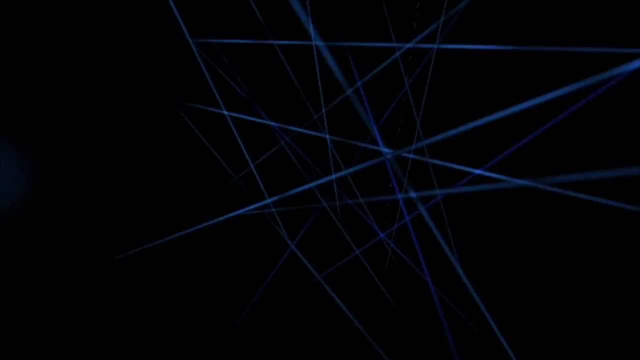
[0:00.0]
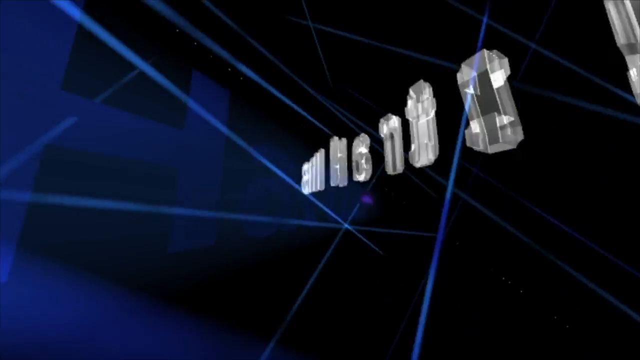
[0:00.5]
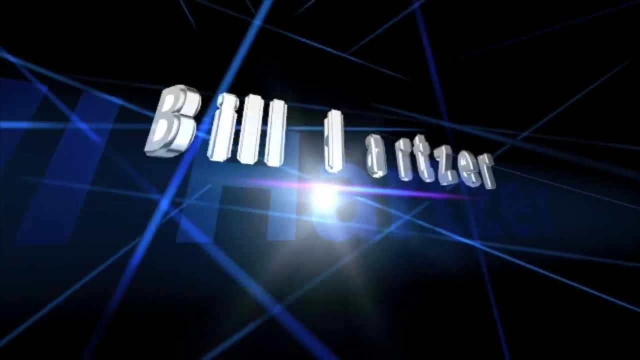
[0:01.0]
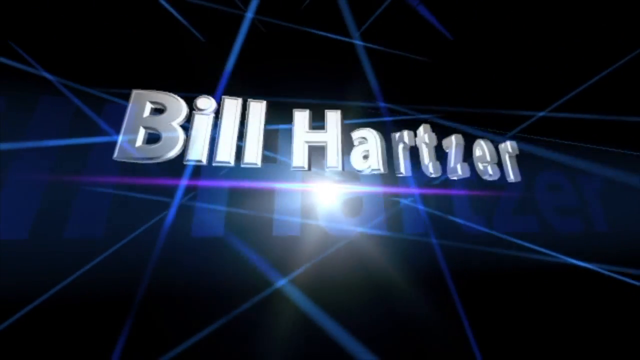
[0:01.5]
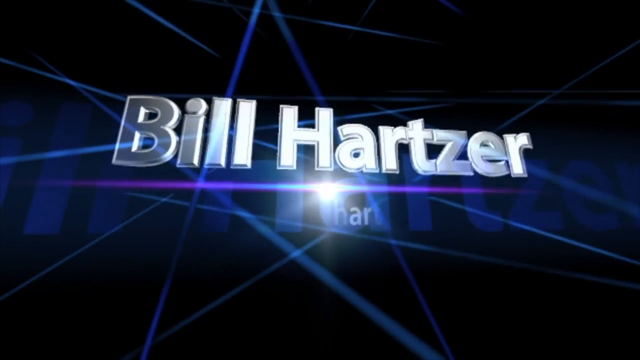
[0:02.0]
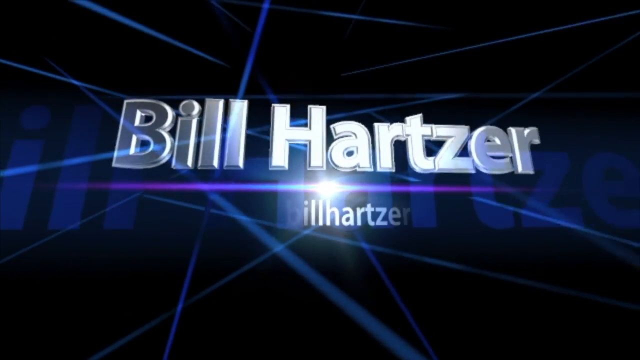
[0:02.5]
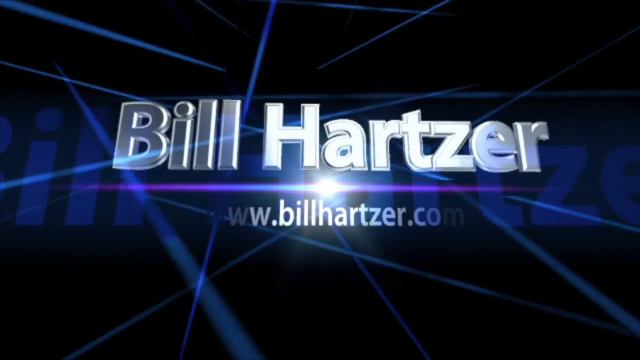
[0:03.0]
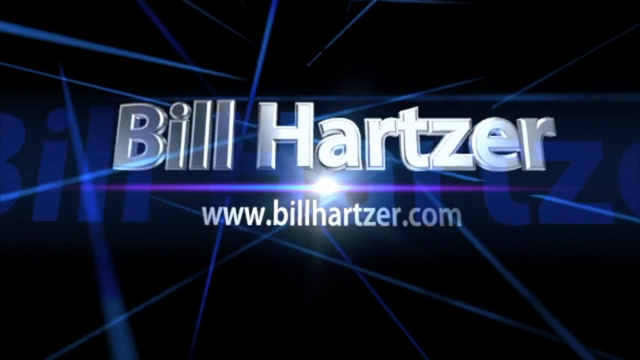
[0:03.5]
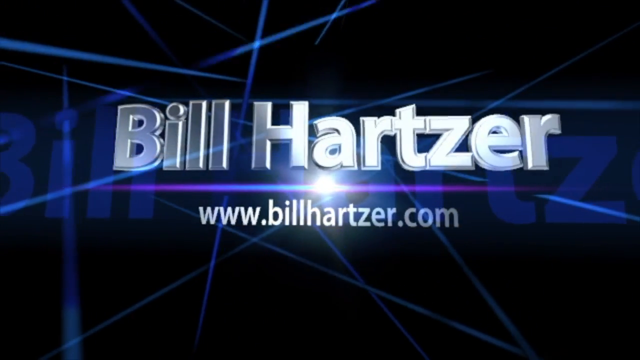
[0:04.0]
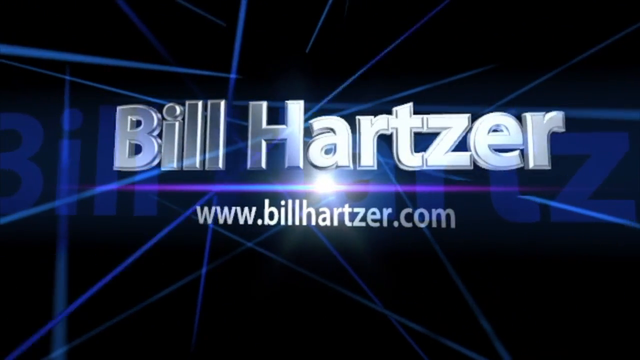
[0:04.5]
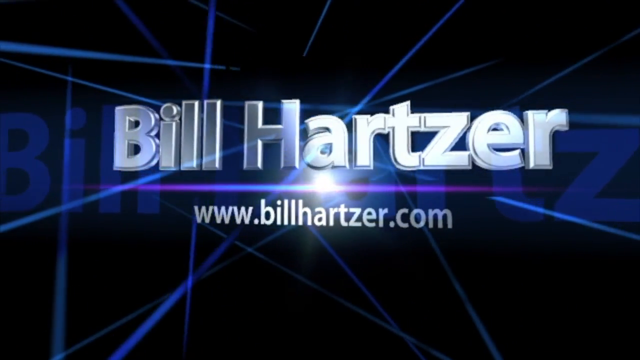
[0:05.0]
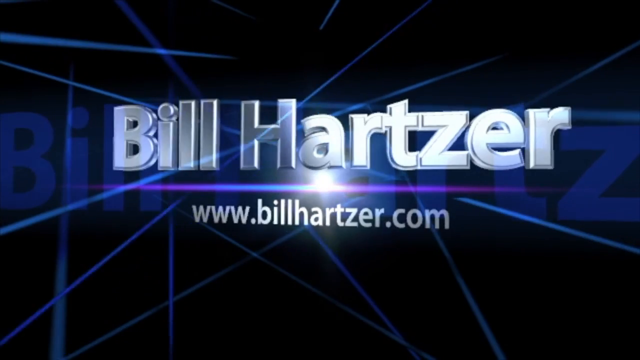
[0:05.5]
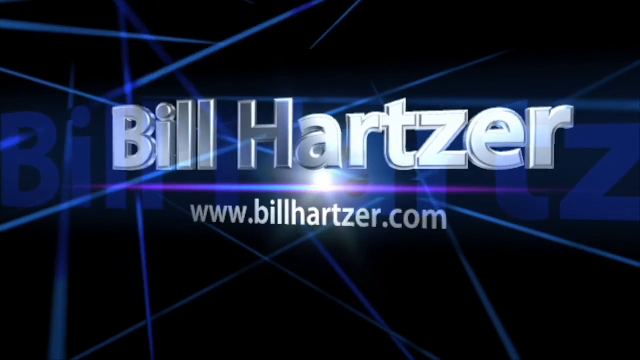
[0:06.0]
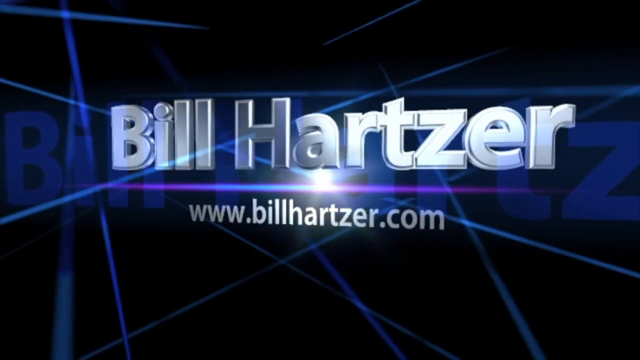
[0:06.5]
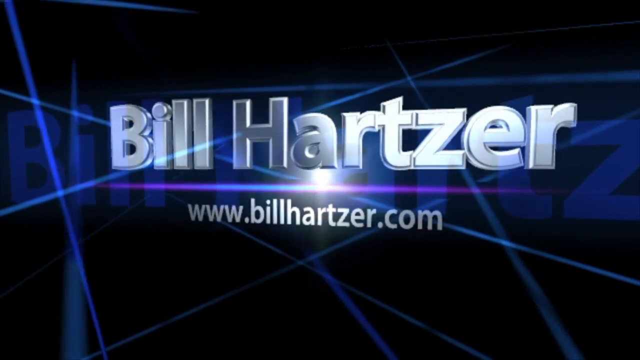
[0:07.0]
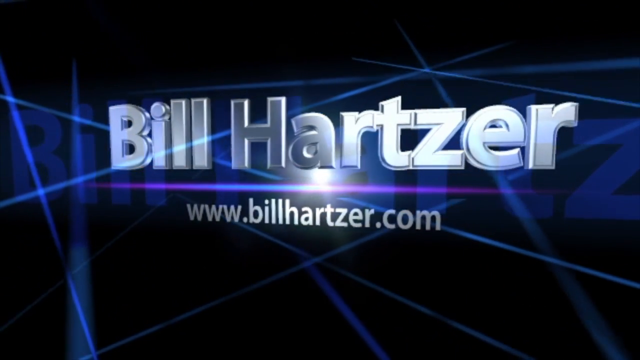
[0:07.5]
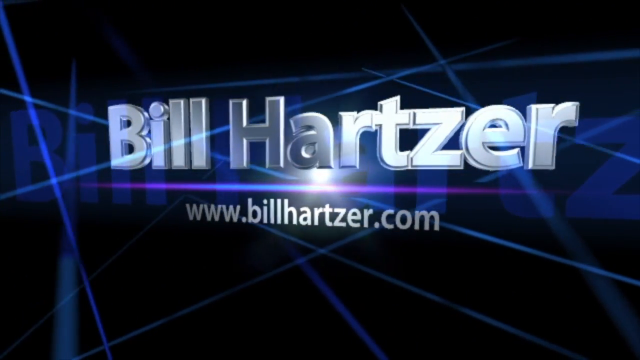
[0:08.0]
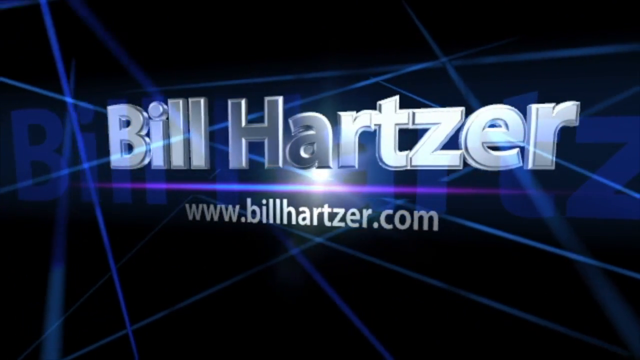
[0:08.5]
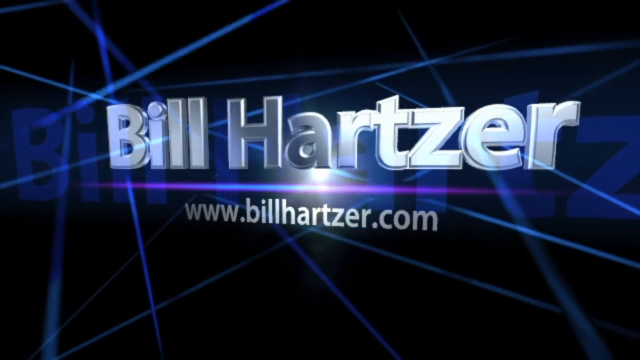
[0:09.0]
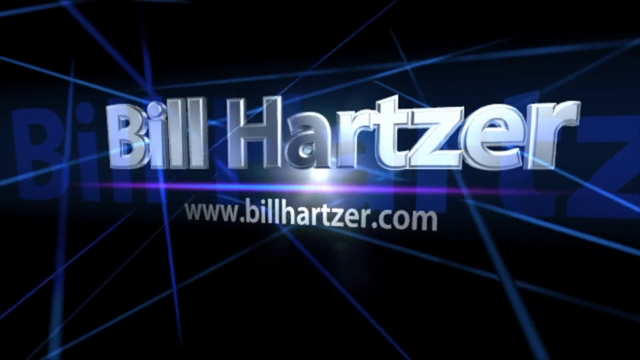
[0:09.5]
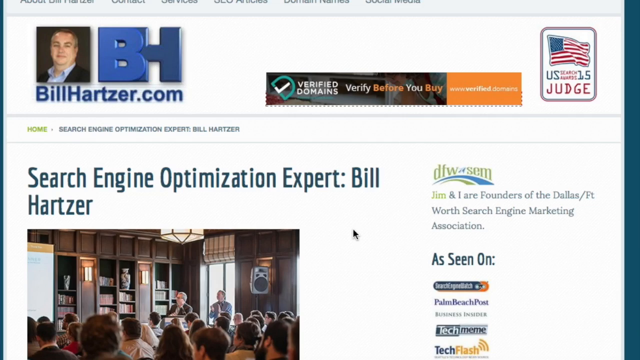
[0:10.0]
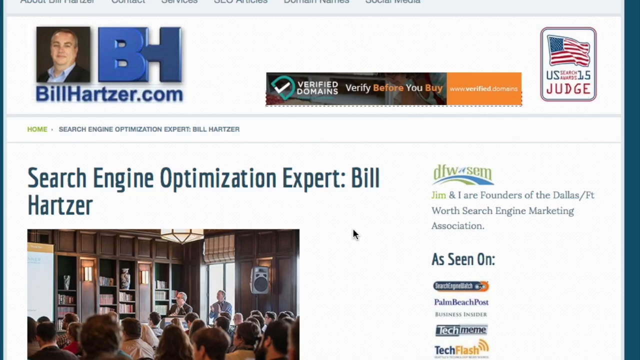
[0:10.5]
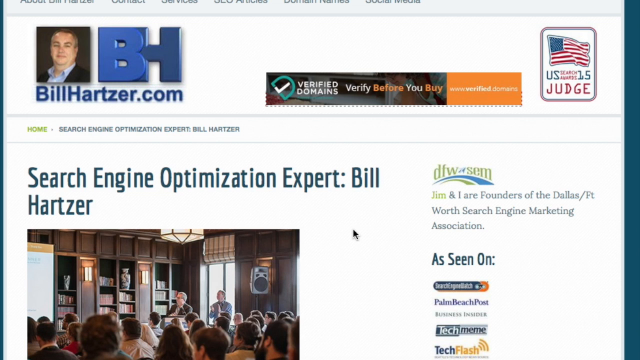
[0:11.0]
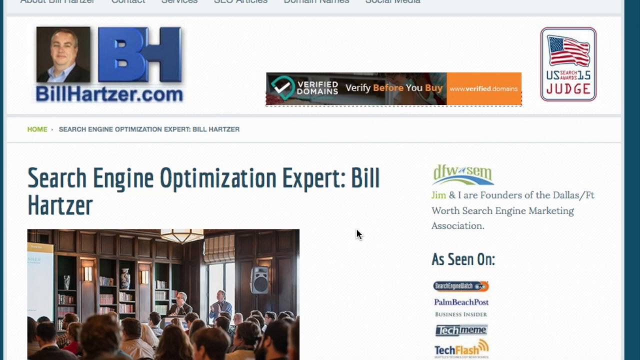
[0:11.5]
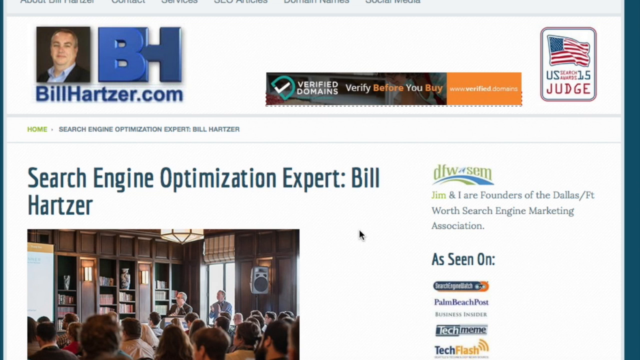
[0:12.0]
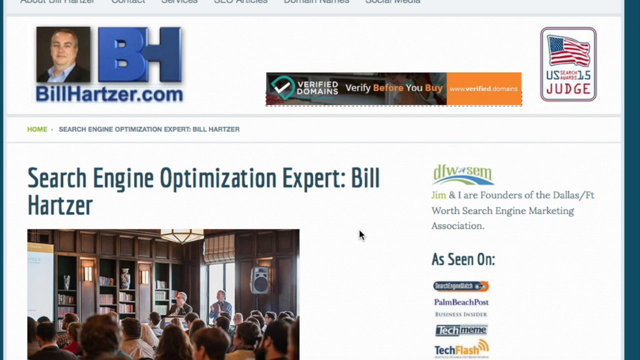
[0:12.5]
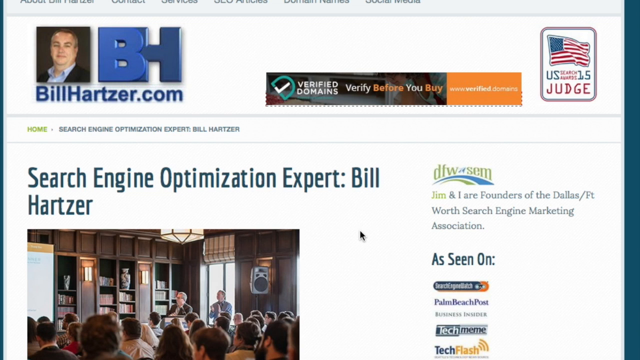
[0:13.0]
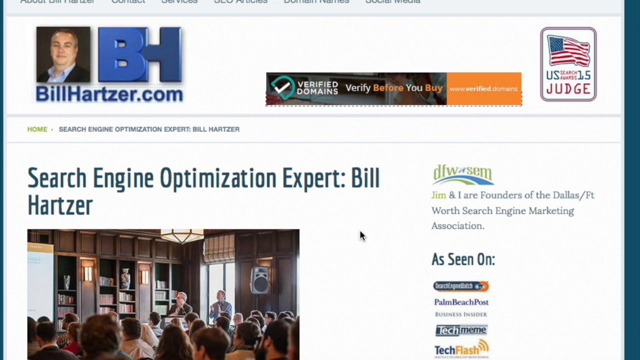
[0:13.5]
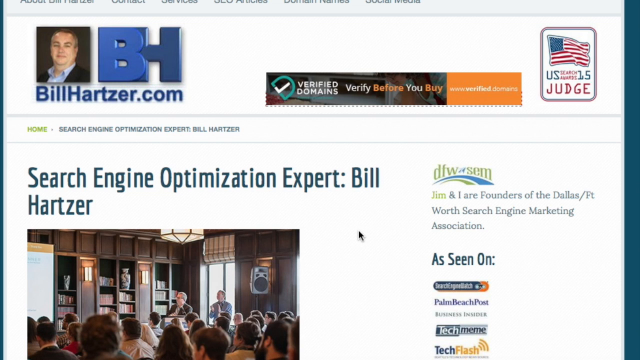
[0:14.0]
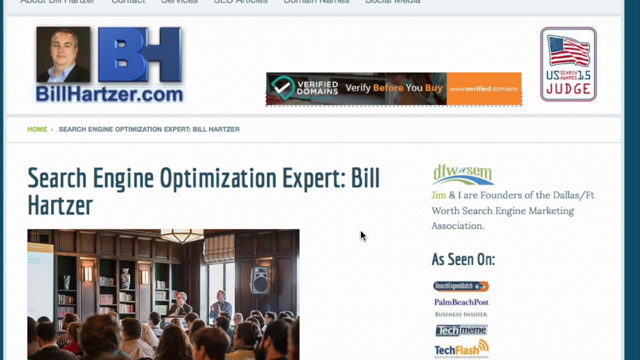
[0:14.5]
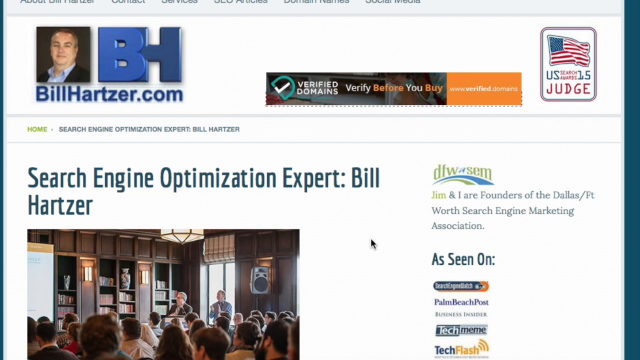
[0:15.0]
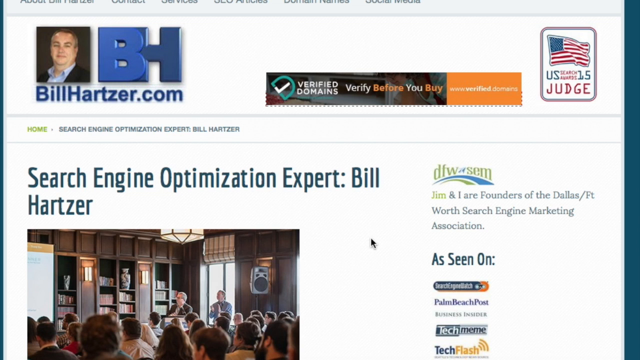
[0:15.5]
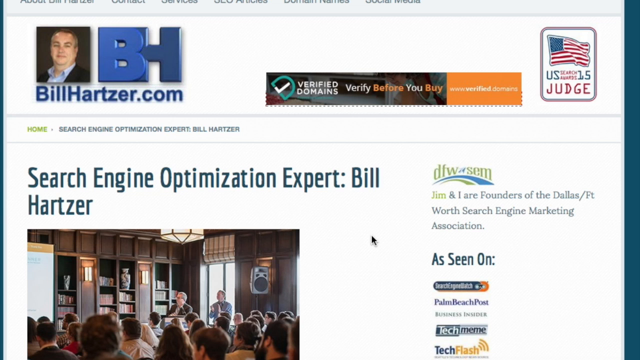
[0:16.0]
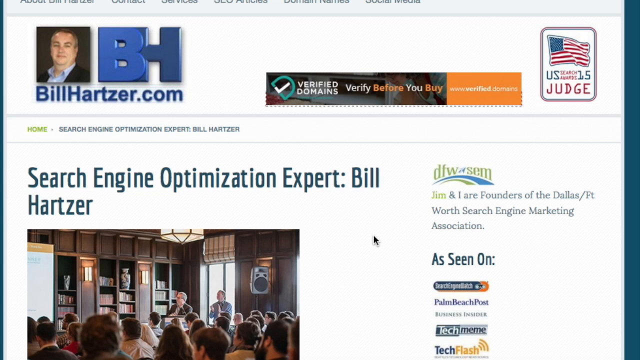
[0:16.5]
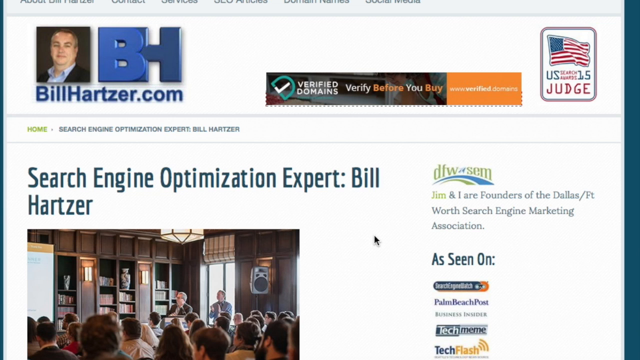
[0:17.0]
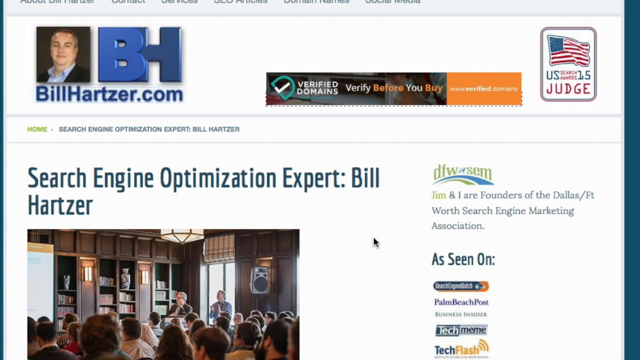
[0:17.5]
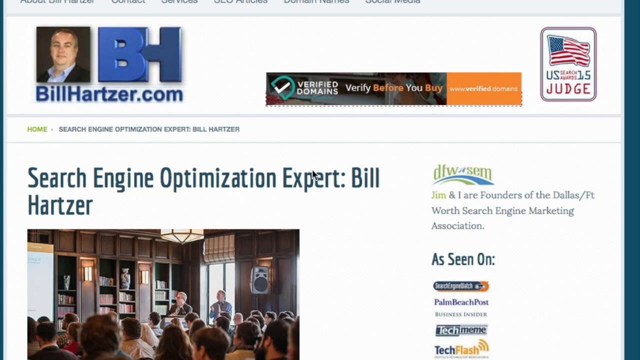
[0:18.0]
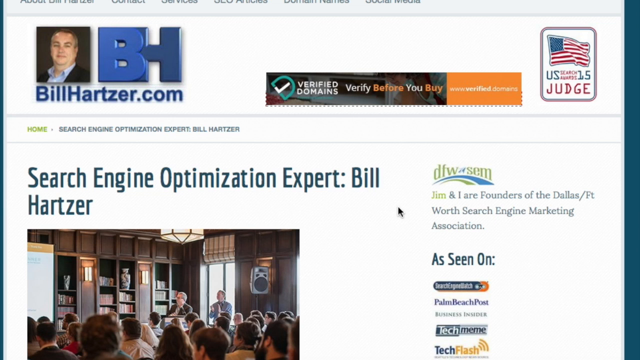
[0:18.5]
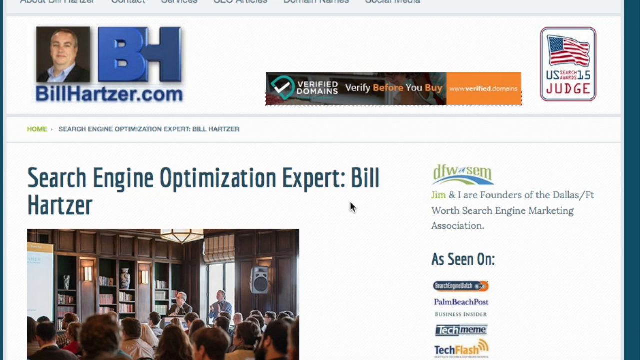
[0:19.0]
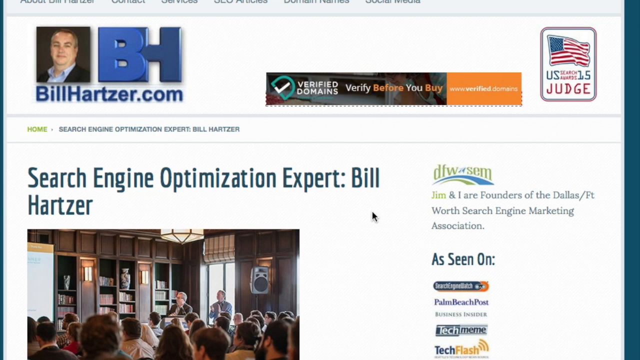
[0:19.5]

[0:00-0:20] The video opens on a black background with a number of blue, laser-like lights shooting through it. The name "Bill Hartzer" appears on the screen in silver, with "www.billhartzer.com" below it. The view then changes to a screen that looks like a website, the BillHartzer.com homepage. In the top left corner is a photo of a Caucasian man with what appears to be short gray hair, wearing a dark blue jacket and a light blue button-up shirt open at the top, with no tie. He is possibly Bill Hartzer, since the photo is up by the logo "BH", with "BillHartzer.com" underneath. Below it, text reads "search engine optimization expert Bill Hartzer". The cursor moves around the screen.